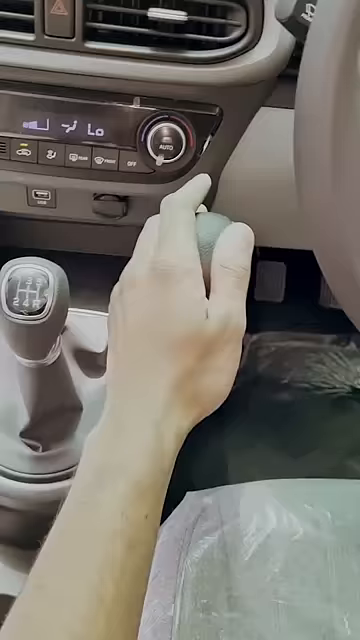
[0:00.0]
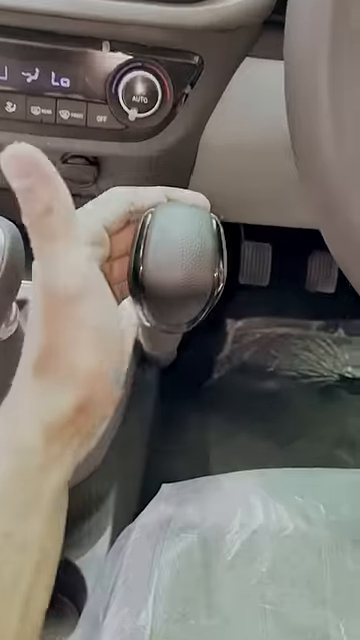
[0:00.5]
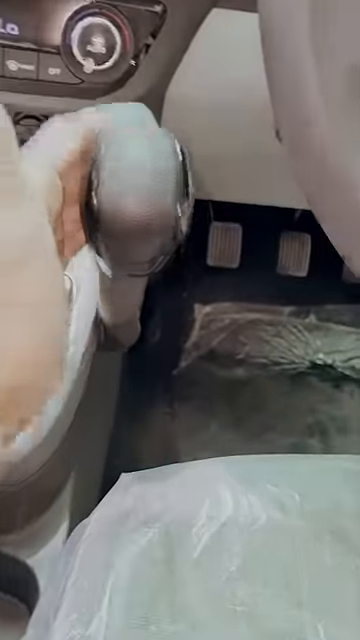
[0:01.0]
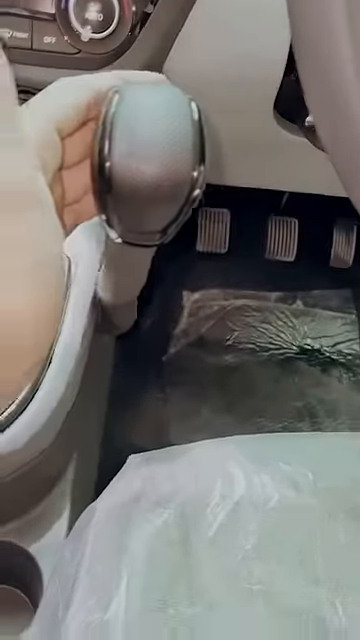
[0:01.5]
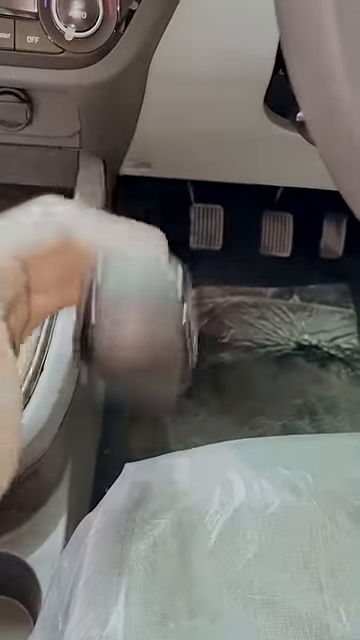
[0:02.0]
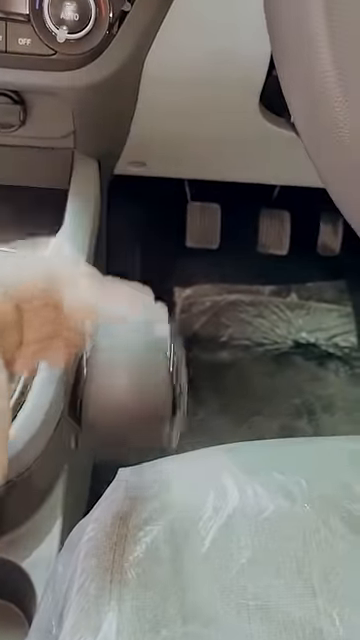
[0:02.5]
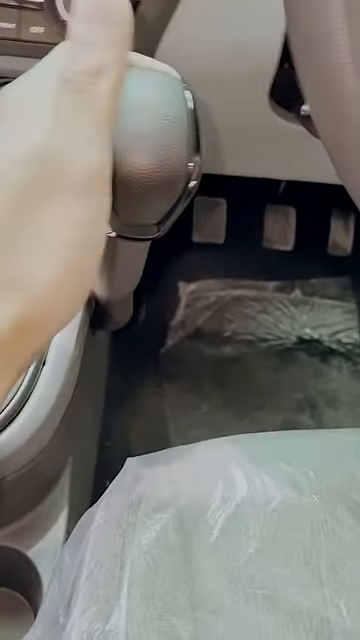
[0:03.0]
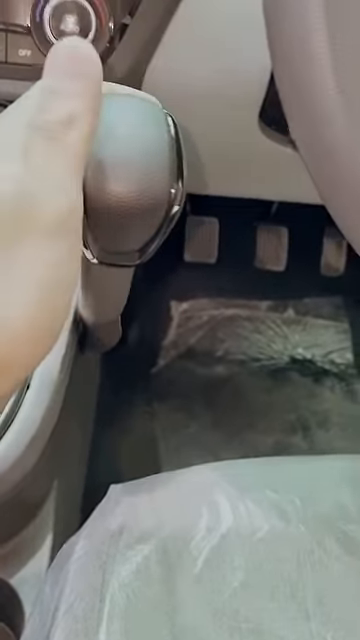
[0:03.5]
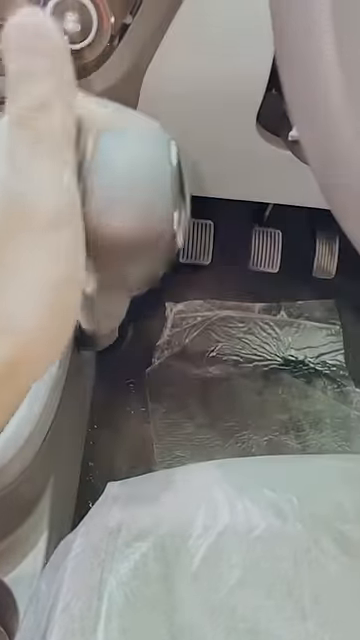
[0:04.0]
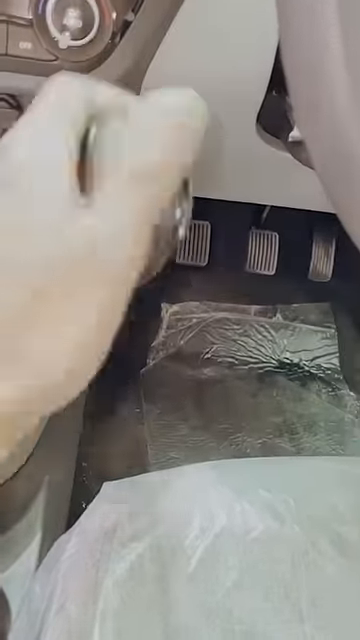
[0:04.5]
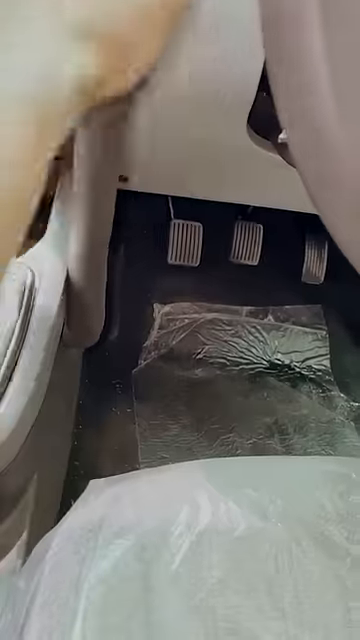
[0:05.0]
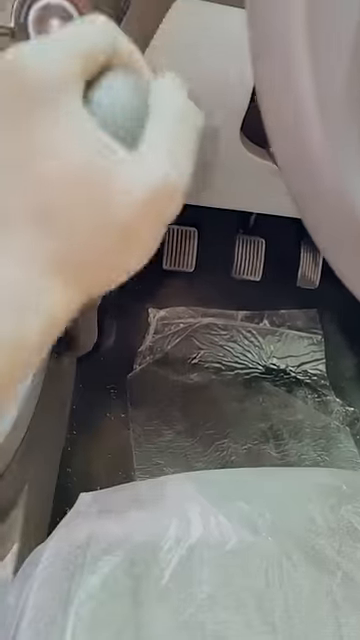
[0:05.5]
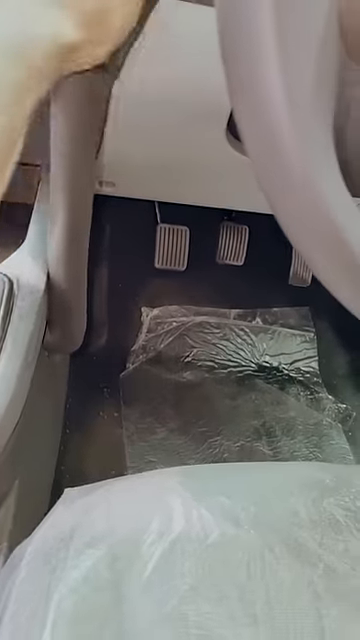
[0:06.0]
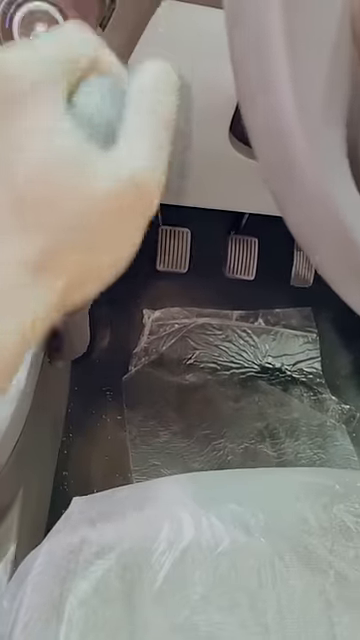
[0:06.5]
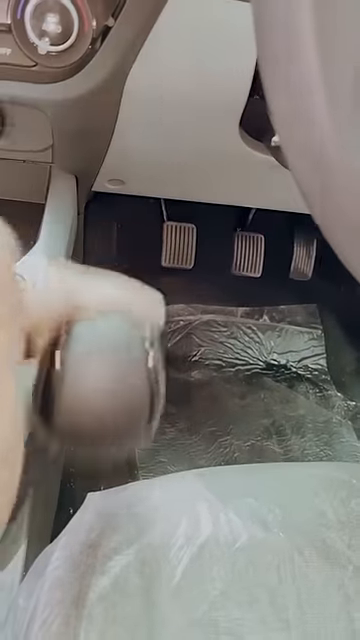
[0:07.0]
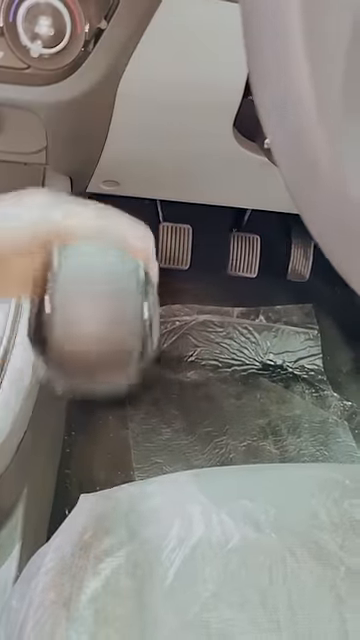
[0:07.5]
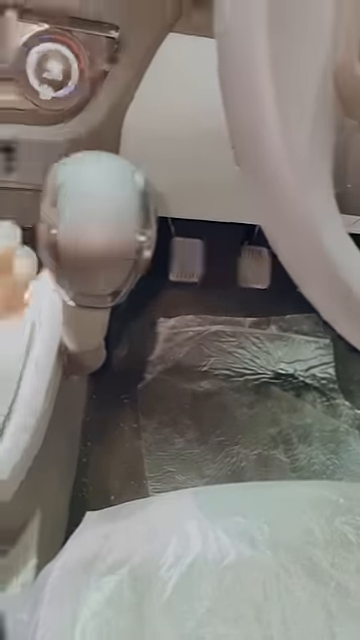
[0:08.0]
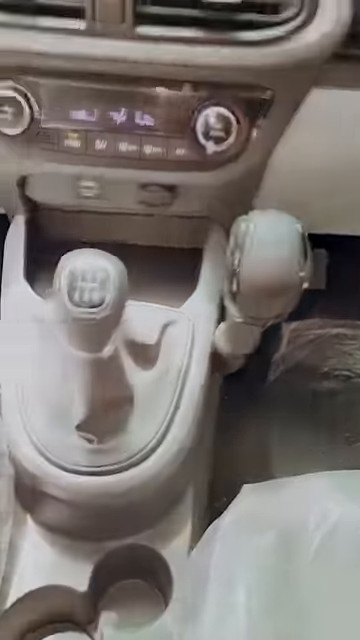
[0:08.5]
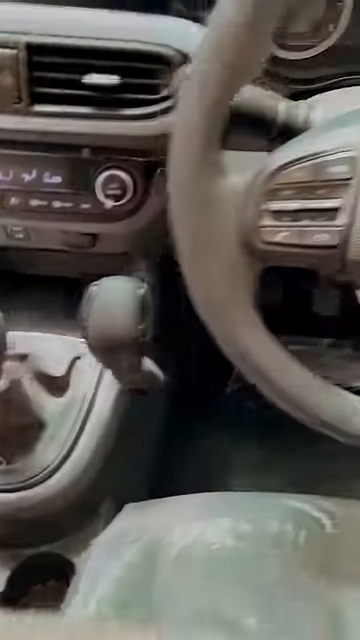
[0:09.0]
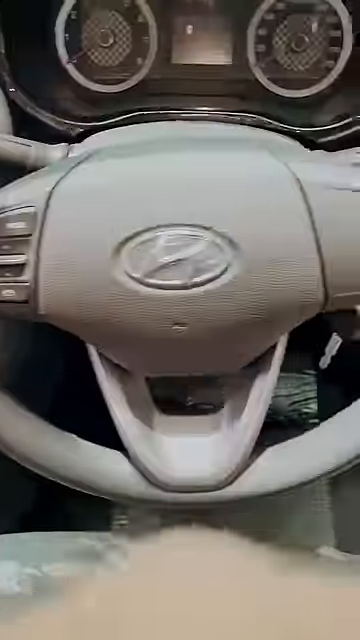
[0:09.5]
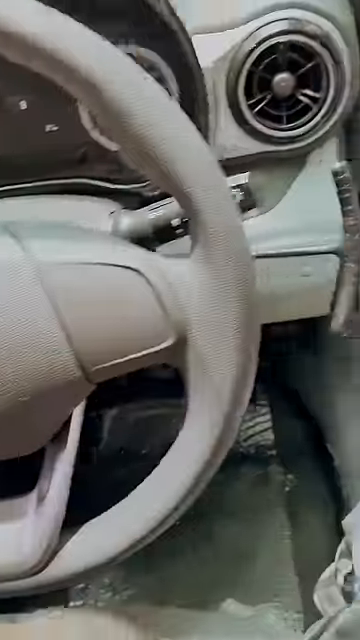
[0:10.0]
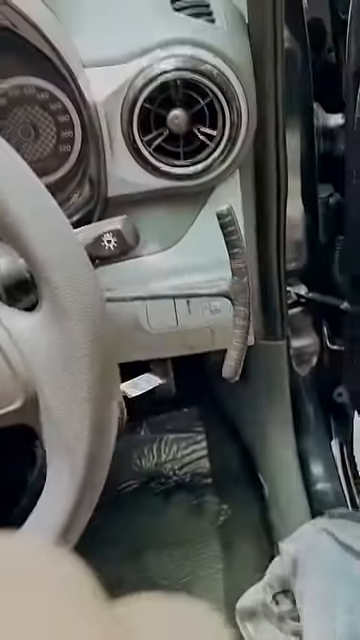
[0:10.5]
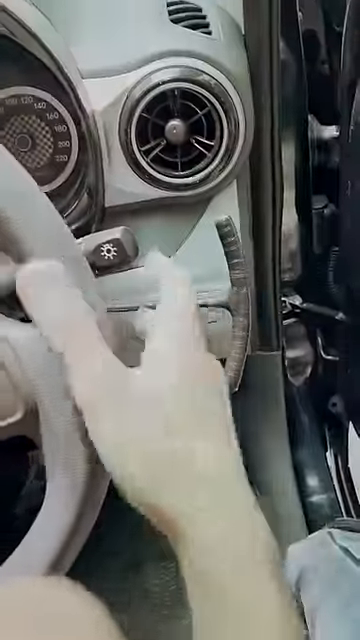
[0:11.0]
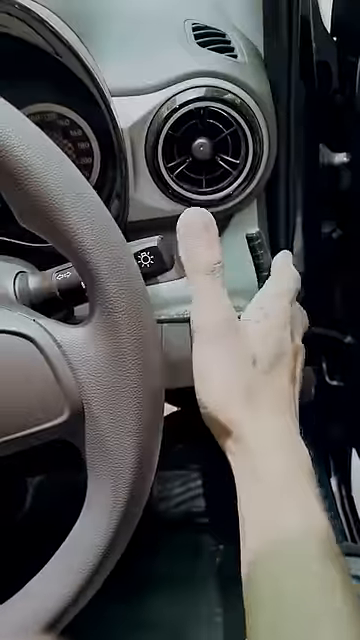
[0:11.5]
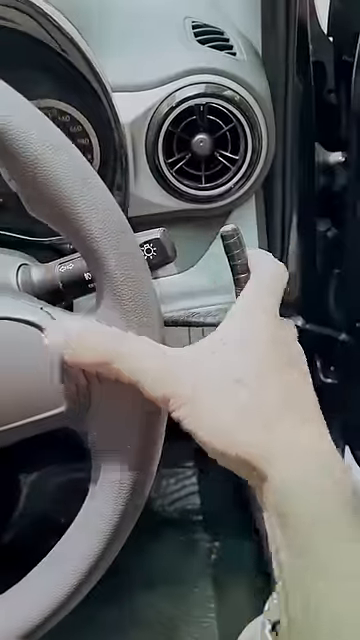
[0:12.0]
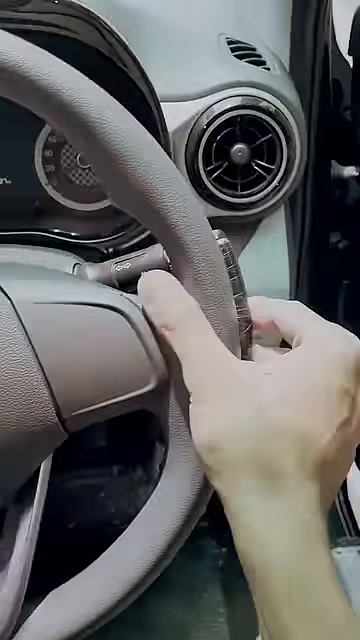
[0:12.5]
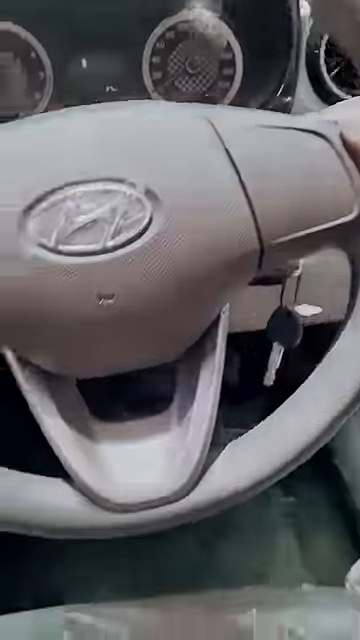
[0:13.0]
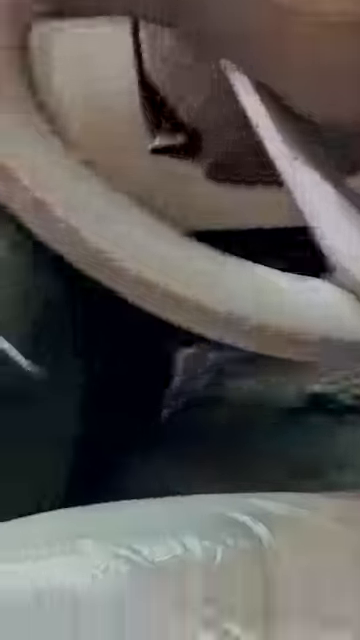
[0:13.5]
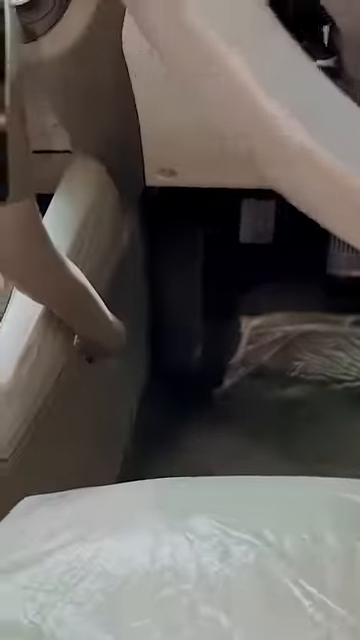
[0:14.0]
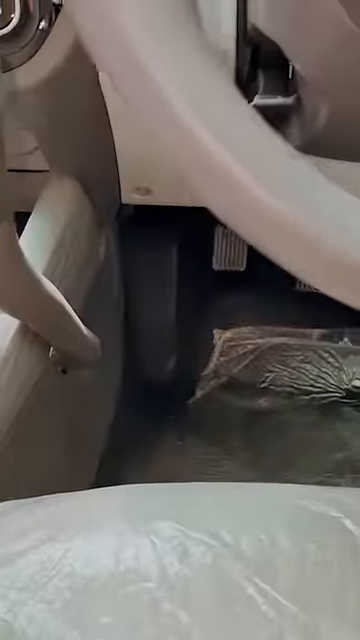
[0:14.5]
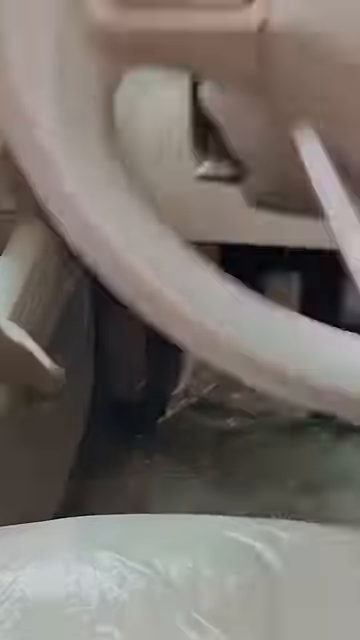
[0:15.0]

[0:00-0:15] The title reads "Nios Handicap Car Driving Contact." A person is on the left side of a car with a tan interior, using aftermarket paddle shifters. There is a knob that, when pulled down, presses the gas pedal, and when pushed forward, presses the brake pedal or the clutch. A shifter to the right of the steering wheel pulls the clutch when it is pulled. The driver demonstrates the controls: pulling the left lever makes the gas go, pushing it forward stops the car, and pulling the handle on the right side of the steering wheel engages the clutch. A normal shifter knob is to the left of the gas and brake knob, and the car appears to be a six-speed. The setup seems meant to let someone without the use of their legs drive with their hands.